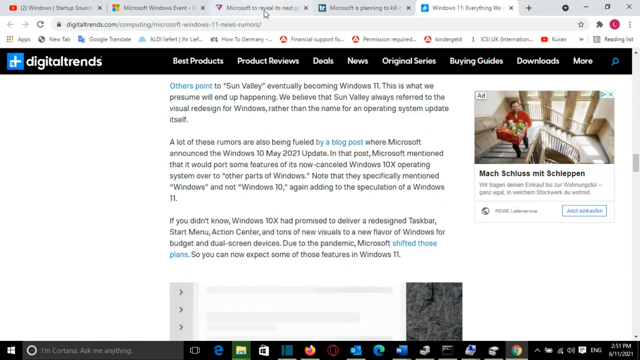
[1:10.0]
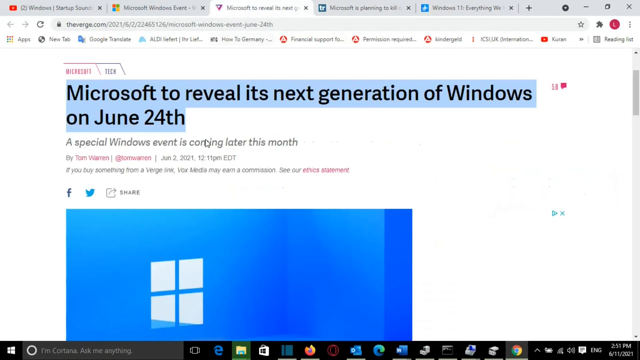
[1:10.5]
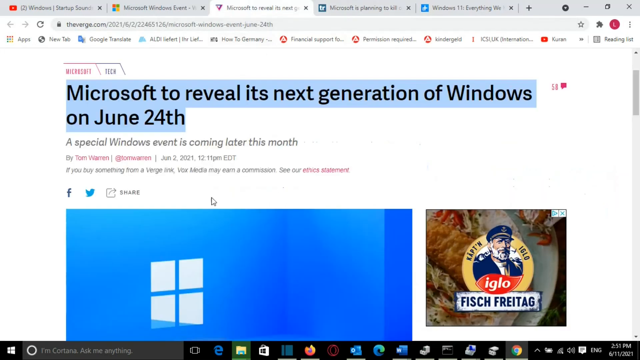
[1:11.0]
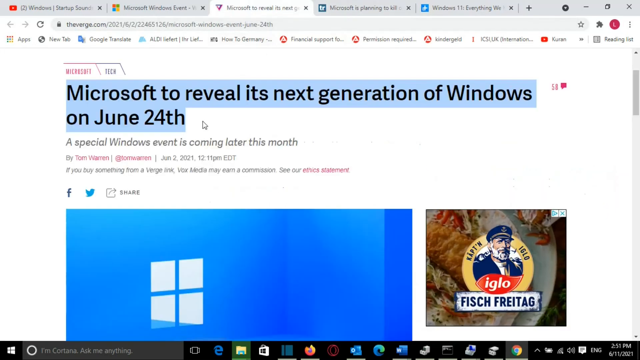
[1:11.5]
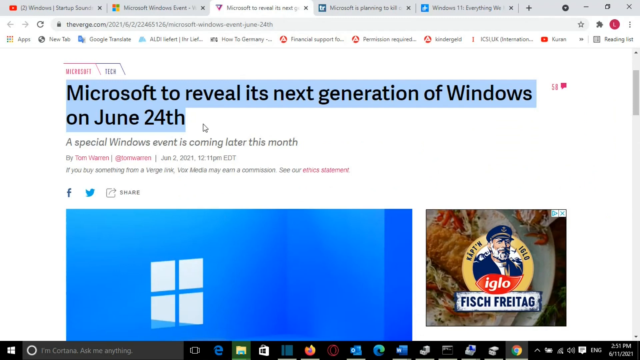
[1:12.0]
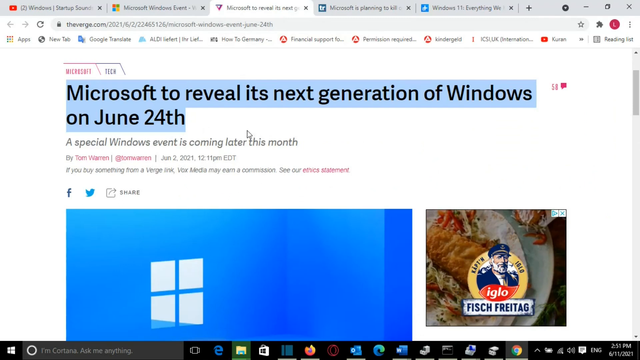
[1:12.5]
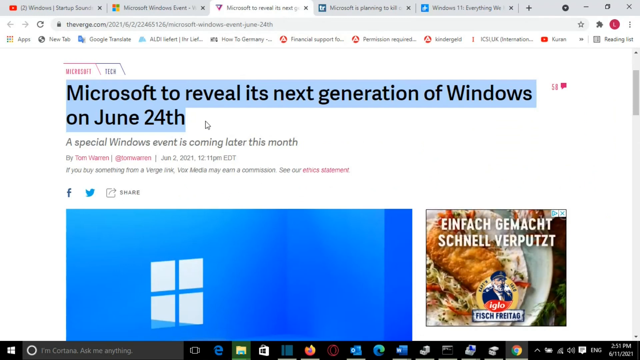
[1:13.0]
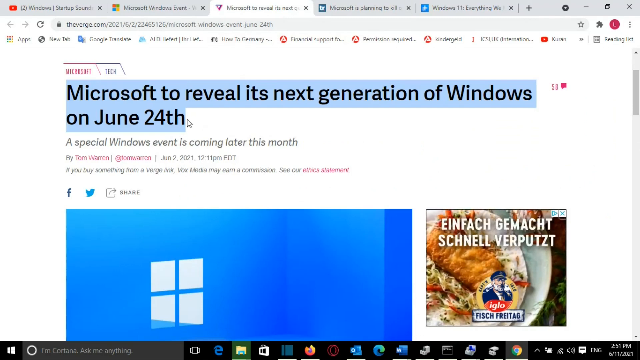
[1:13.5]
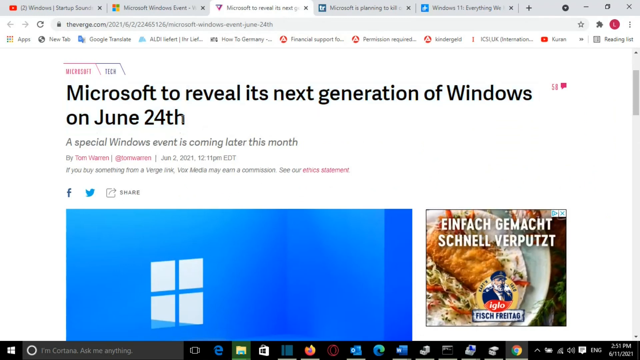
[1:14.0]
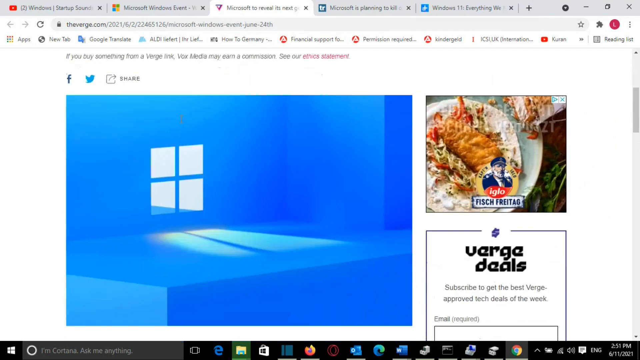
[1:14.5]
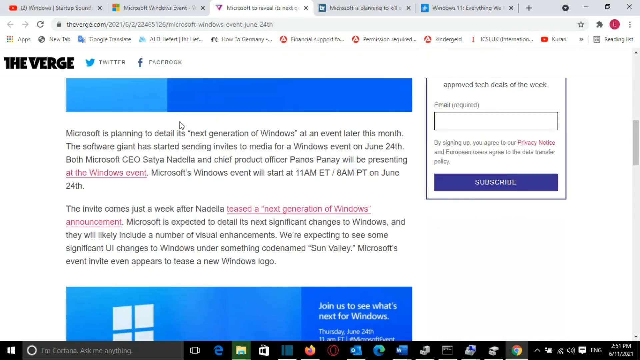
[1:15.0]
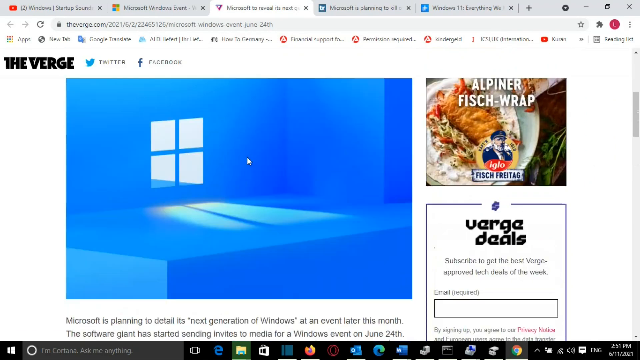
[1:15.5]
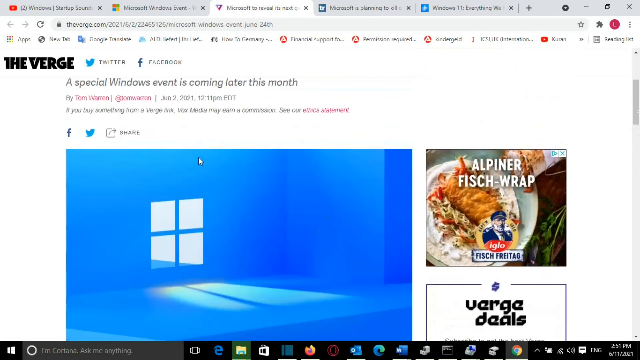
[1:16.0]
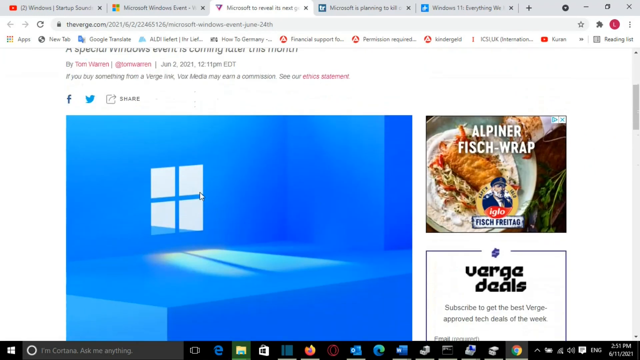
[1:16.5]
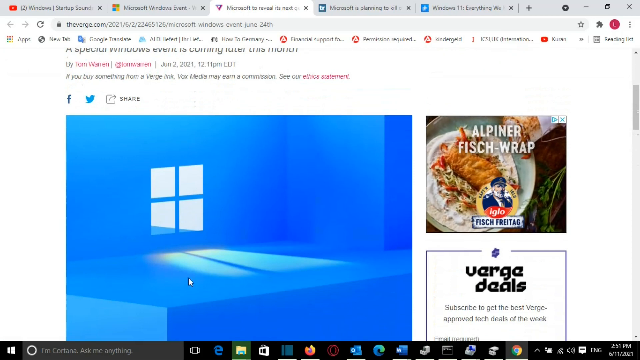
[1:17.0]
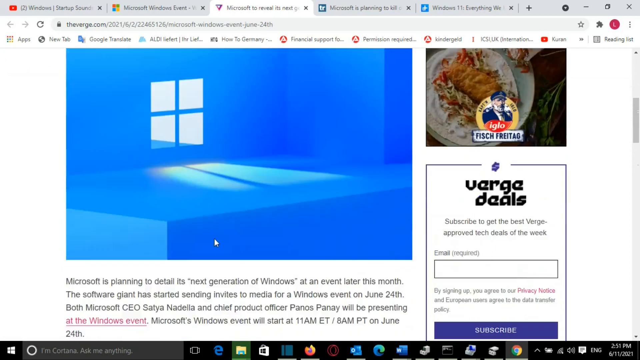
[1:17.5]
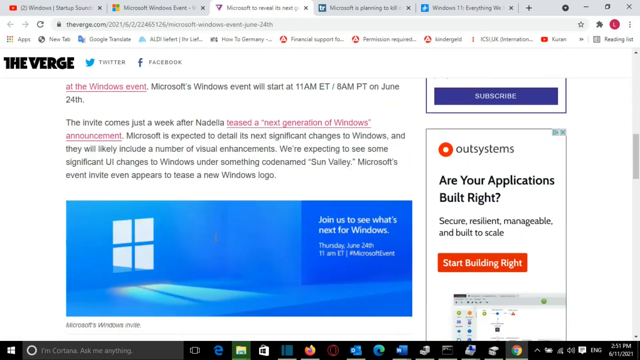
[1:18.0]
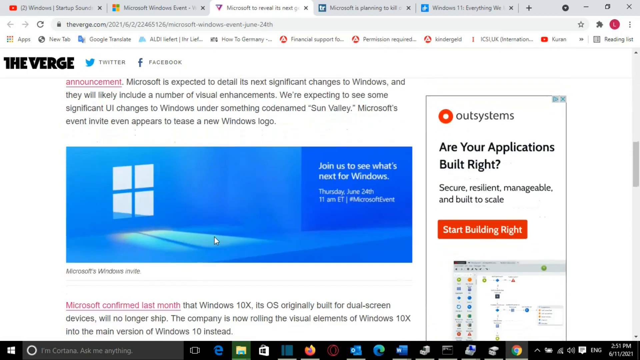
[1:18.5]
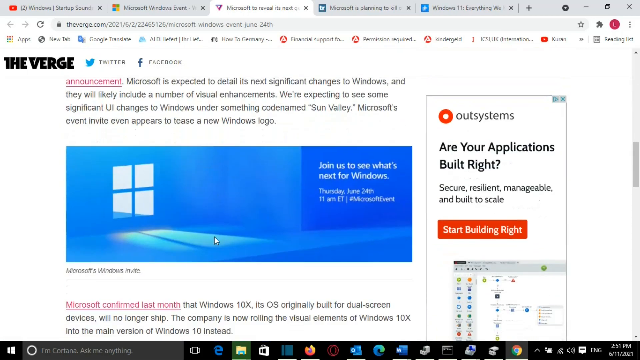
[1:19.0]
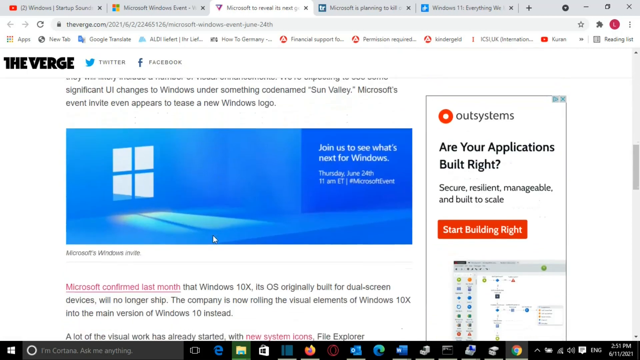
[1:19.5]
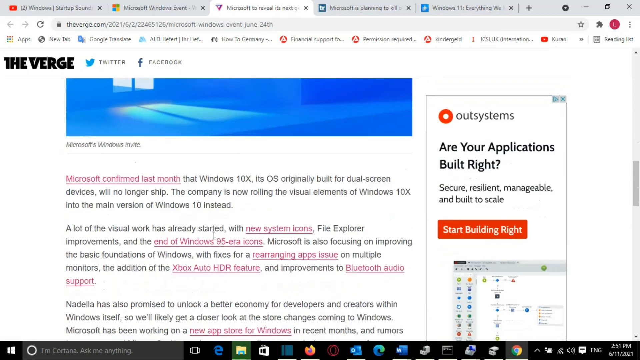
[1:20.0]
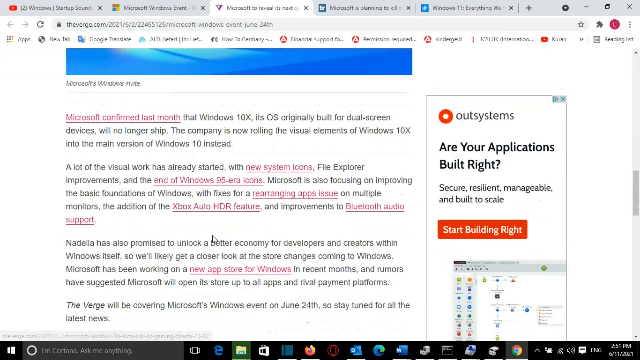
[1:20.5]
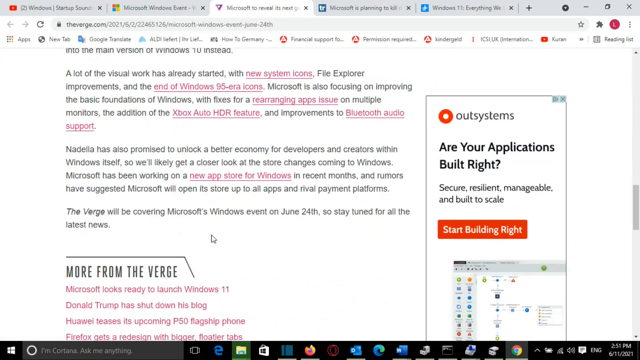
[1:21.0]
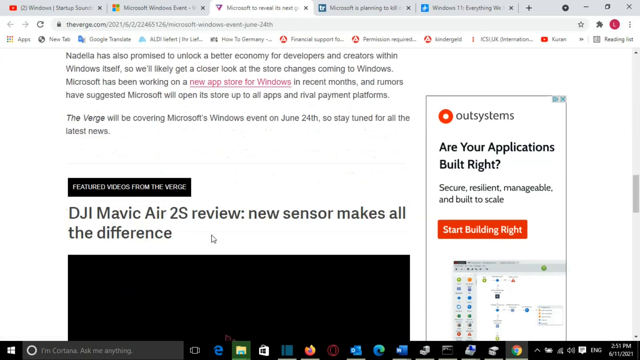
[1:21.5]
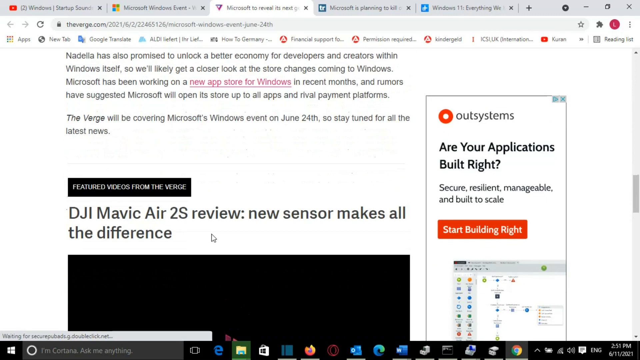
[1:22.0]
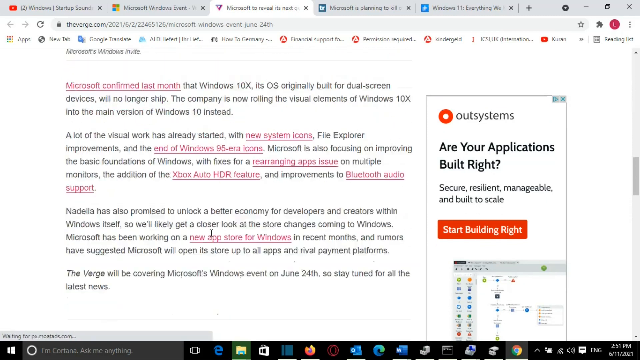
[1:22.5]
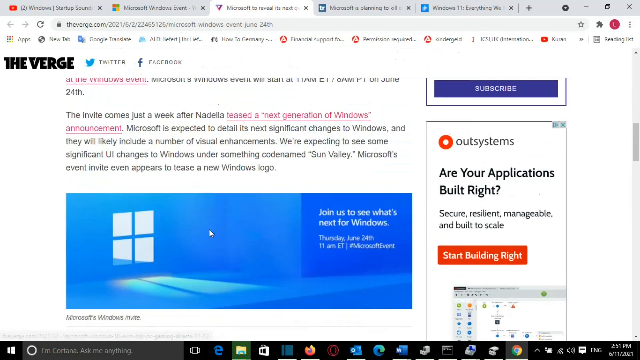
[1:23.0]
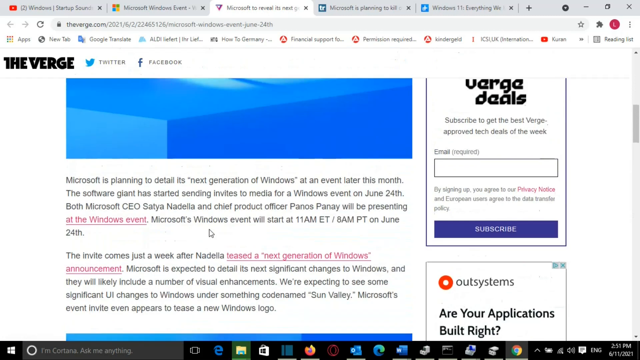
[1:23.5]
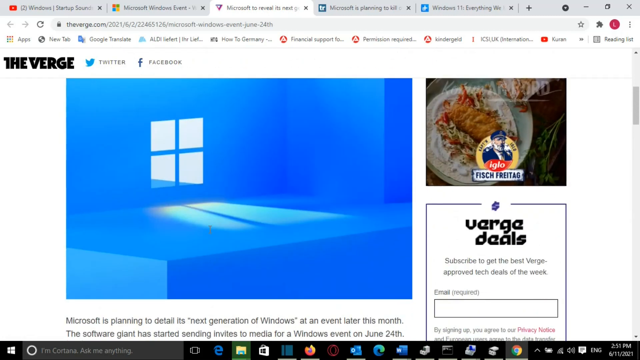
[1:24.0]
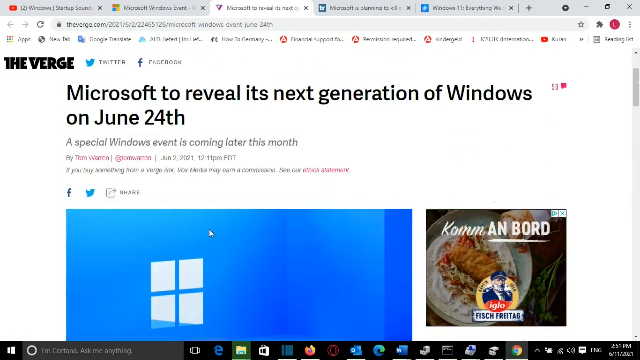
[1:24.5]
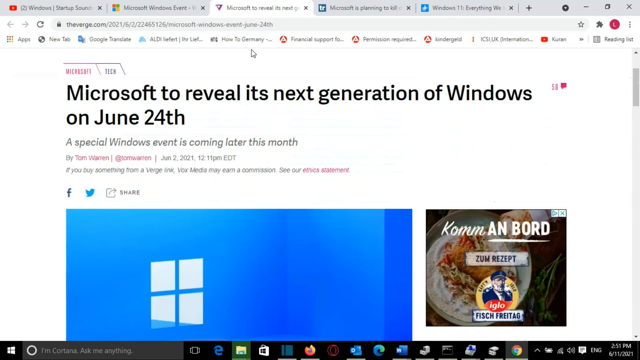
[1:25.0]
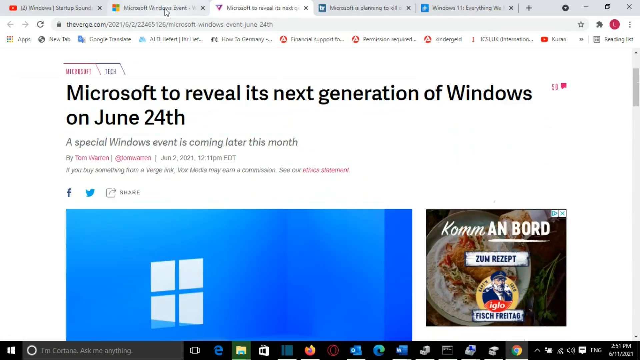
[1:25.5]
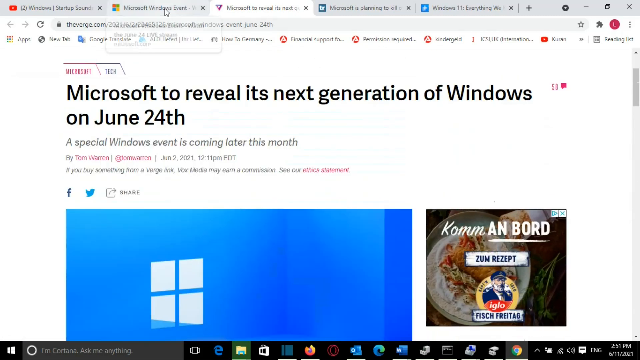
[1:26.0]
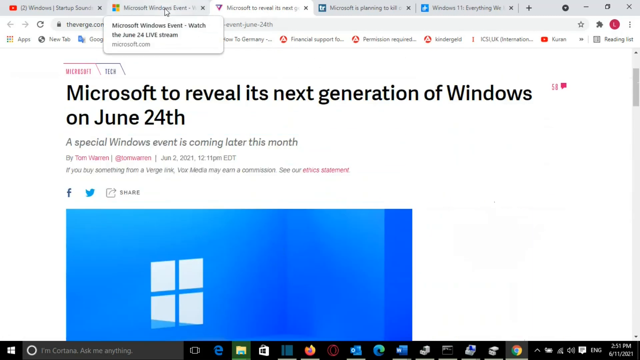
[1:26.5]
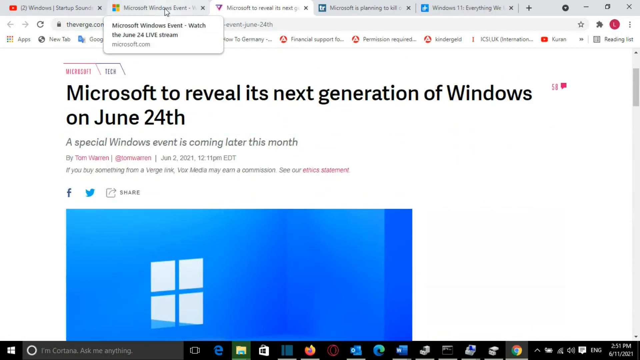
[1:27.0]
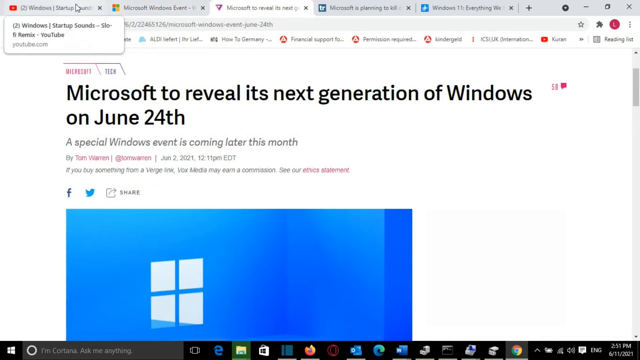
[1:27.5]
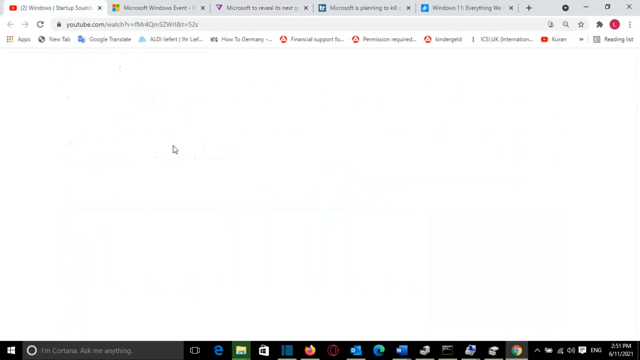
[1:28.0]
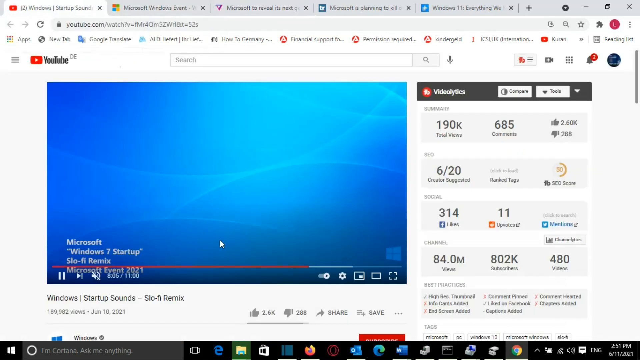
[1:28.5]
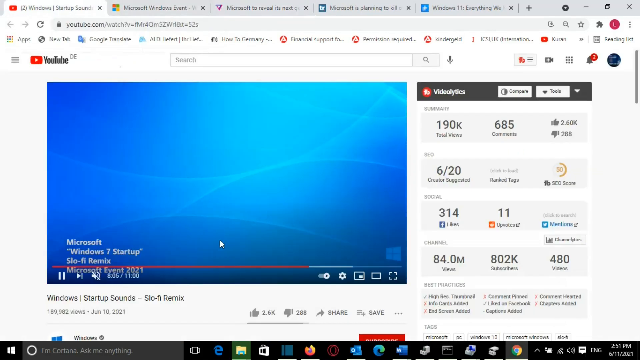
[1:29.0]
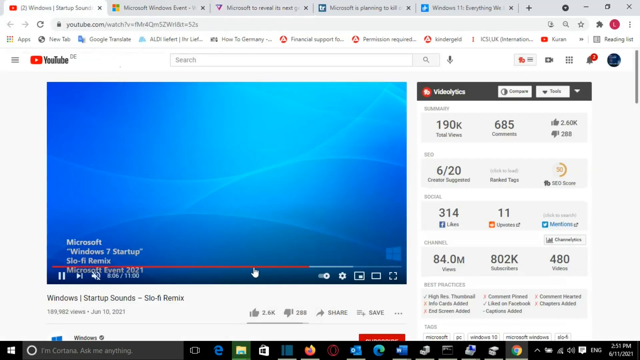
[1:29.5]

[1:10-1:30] The website digitaltrends.com is shown. Its blue logo appears to encapsulate a letter D that sort of looks like a plus sign. The cursor moves over to one of the tabs and clicks on it, opening a website called diverge.com. The words "Microsoft to reveal its next generation of Windows on June 24th" appear, and the cursor hovers around them for a few seconds. The page scrolls down and back up, the cursor sort of points toward Microsoft Windows Local, and the page scrolls back down and continues scrolling. On the right side of the page, different ads are displayed, such as Verge Deals and Eagle Fish. The cursor hovers over a tab labeled Microsoft Windows Events, then moves over to the YouTube tab and clicks on it.